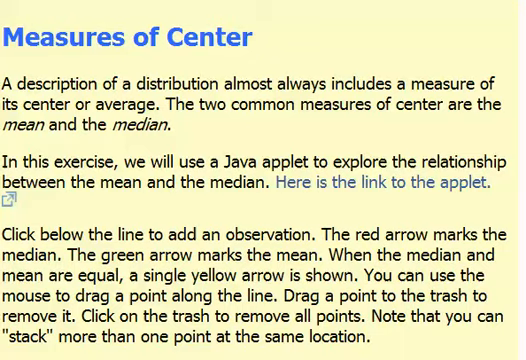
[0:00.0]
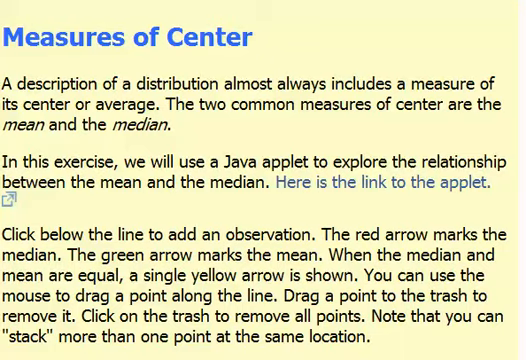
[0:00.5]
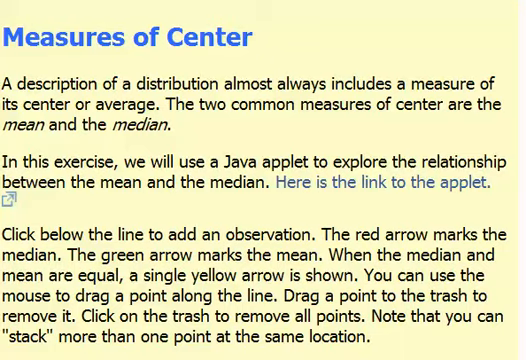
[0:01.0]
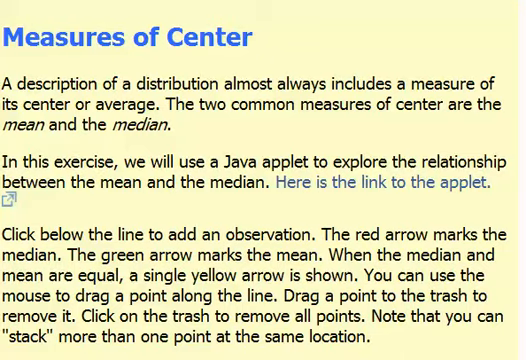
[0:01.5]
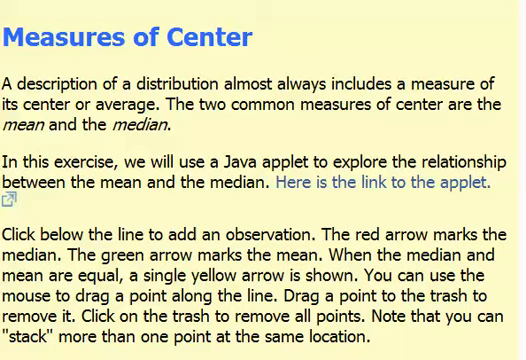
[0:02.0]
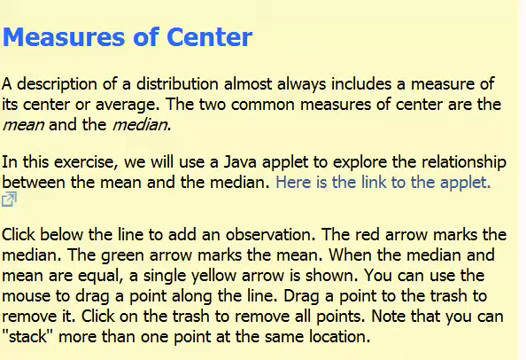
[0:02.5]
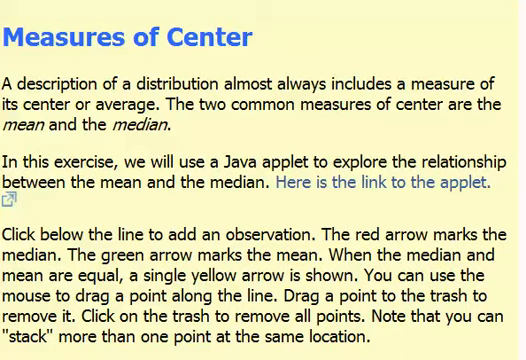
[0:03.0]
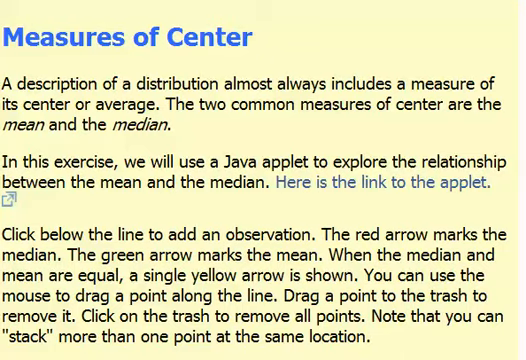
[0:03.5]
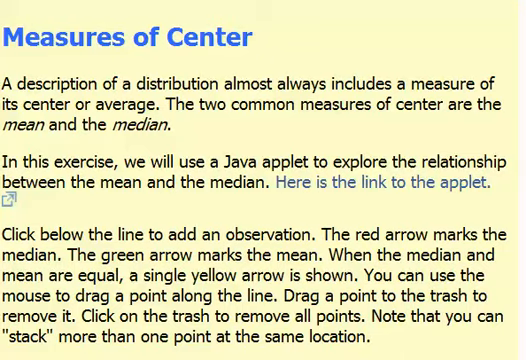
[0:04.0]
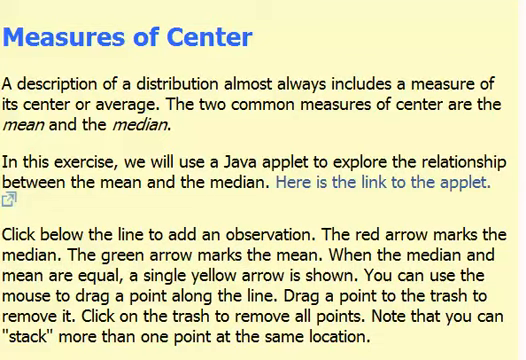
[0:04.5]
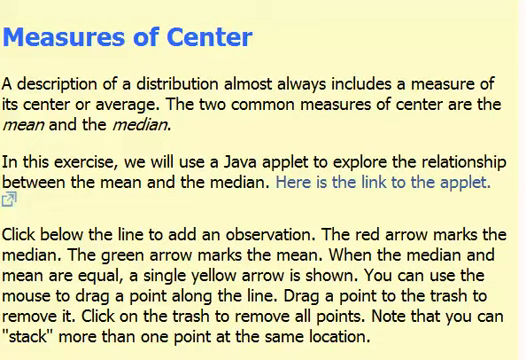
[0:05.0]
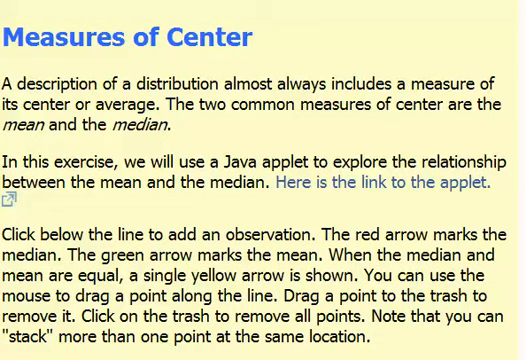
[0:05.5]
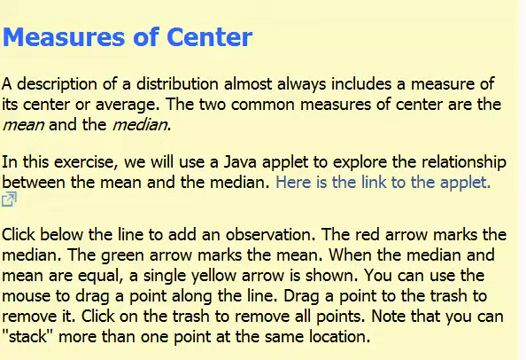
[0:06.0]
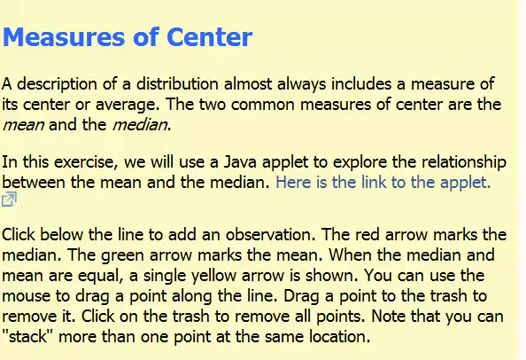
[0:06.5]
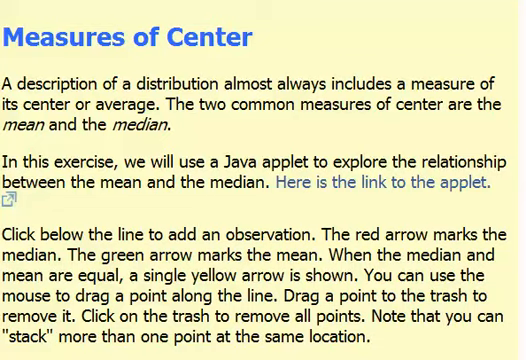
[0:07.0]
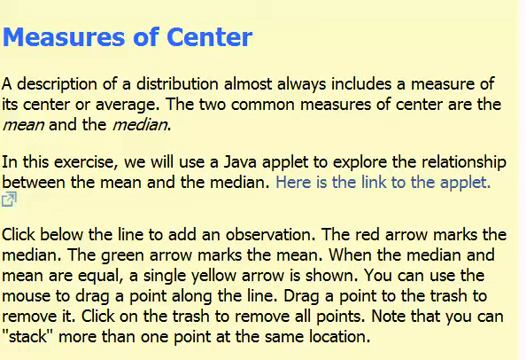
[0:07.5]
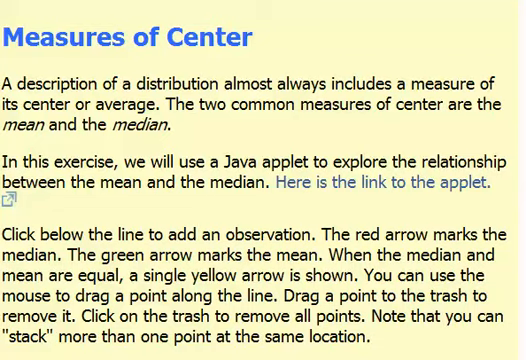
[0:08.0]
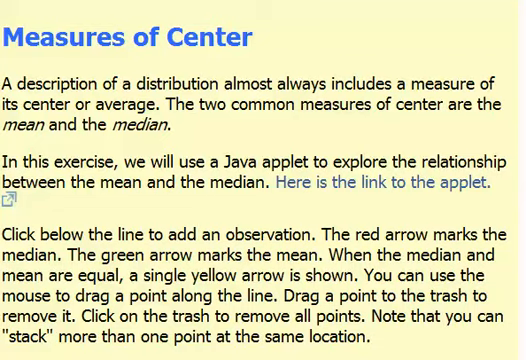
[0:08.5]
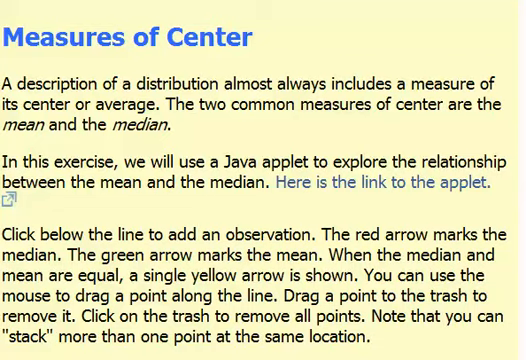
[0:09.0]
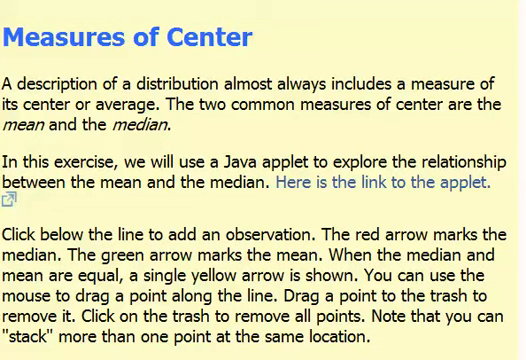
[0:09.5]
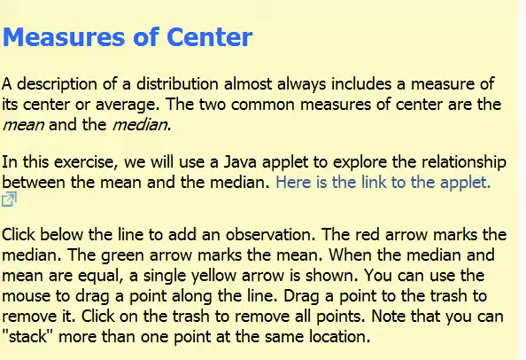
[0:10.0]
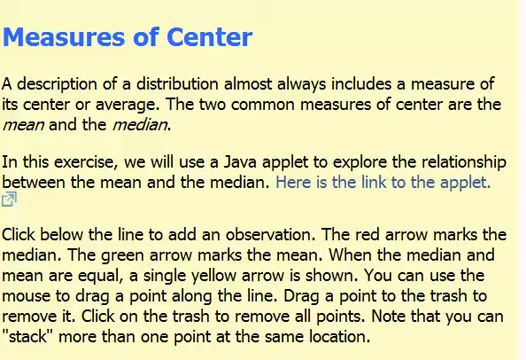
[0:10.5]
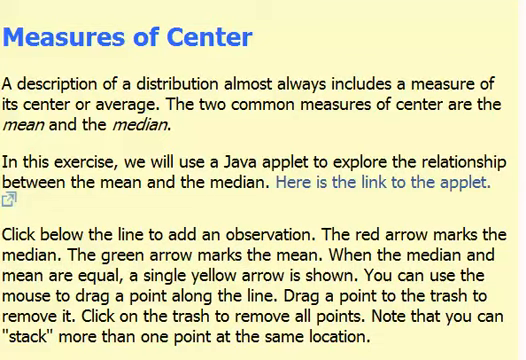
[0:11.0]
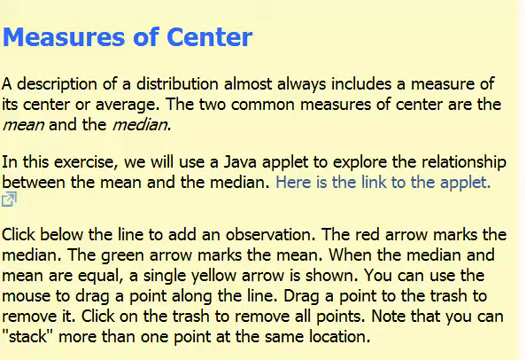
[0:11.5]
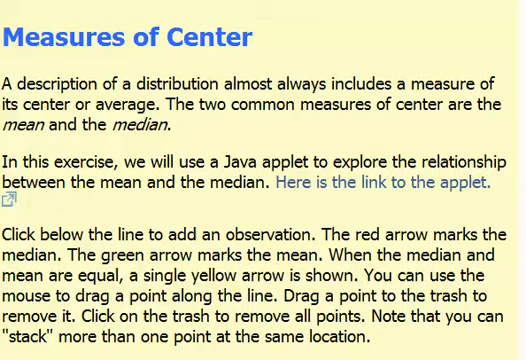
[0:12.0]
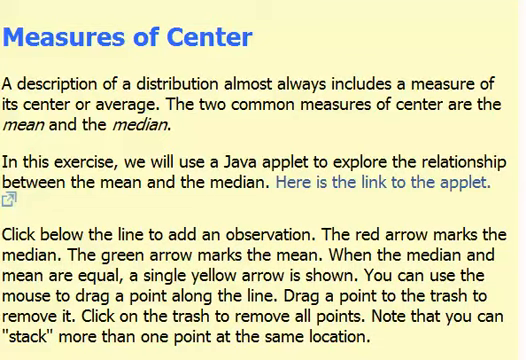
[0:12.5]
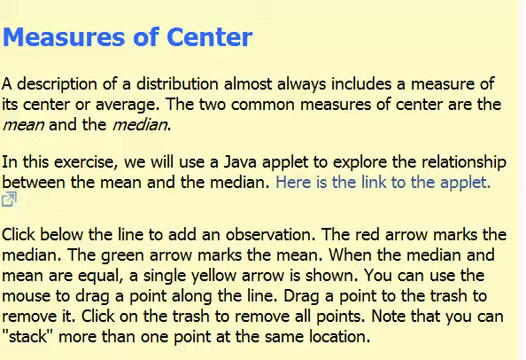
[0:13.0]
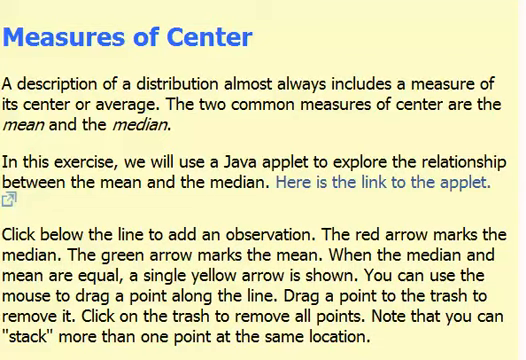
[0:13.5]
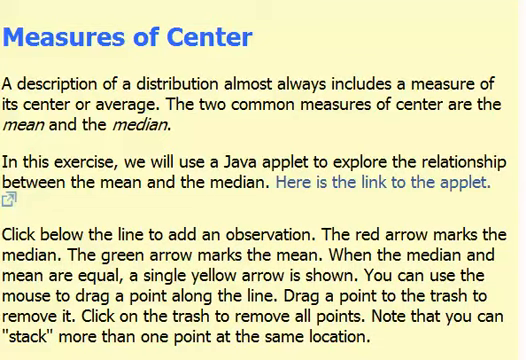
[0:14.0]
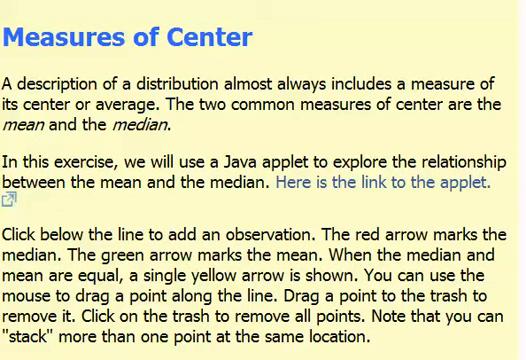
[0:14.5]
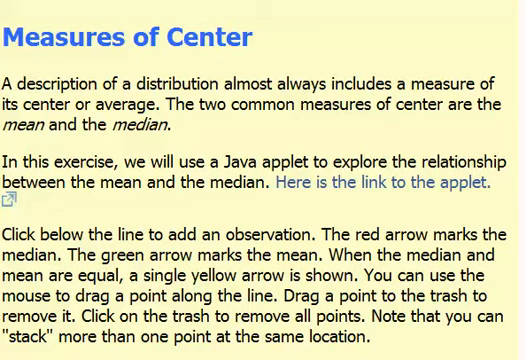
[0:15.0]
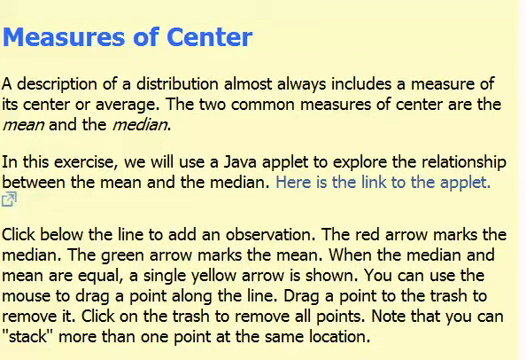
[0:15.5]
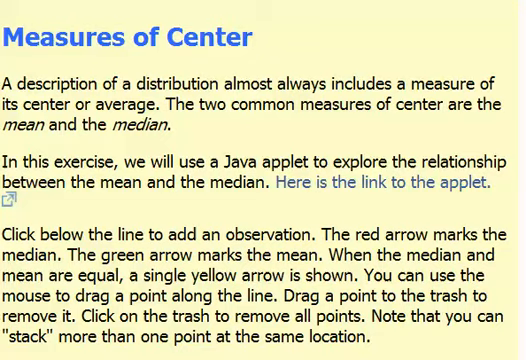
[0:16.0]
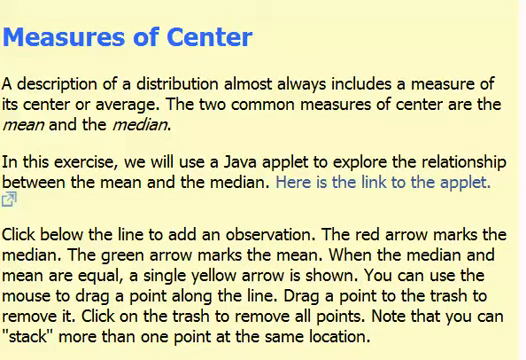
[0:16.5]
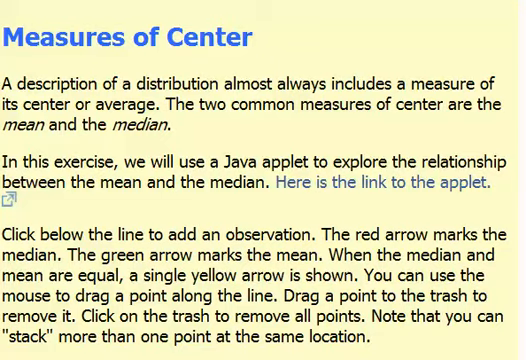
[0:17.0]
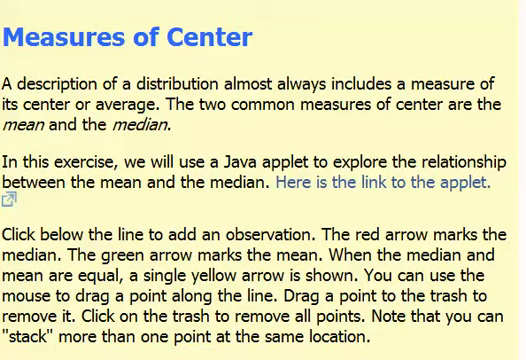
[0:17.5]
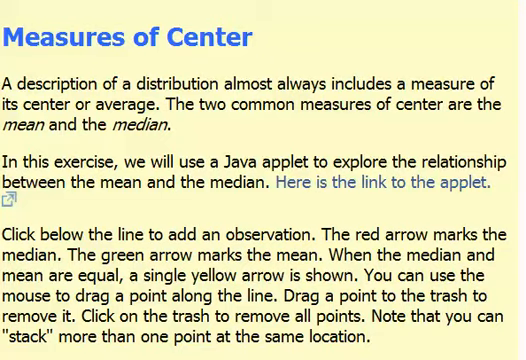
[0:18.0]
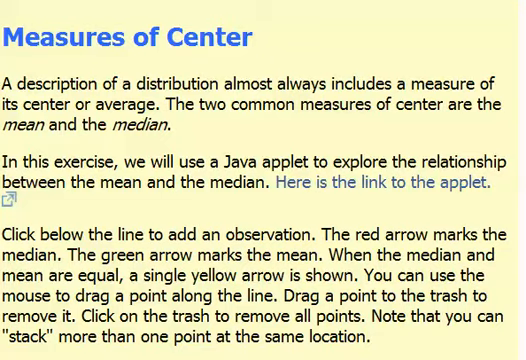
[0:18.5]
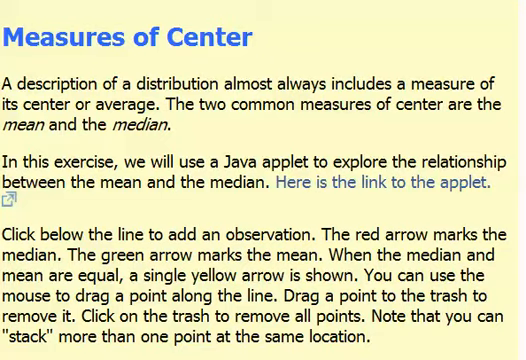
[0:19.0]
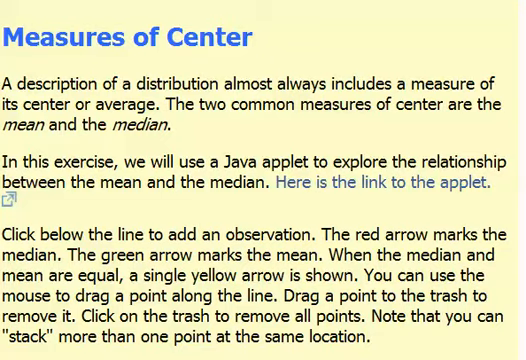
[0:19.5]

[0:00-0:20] The video opens with the on-screen heading "measures of center." Below it is a definition: "a description of a distribution almost always includes a measure of its center or average. The two common measures of center are the mean and the median." The text under the heading has three paragraphs. The next reads "in this exercise, we will use a Java applet to explore the relationship between the mean and the median," followed by "here is the link to the applet," with the link highlighted in blue, indicating it is a link. The third paragraph reads "click below the line to add an observation. The red arrow marks the median. The green arrow marks the mean. When the median and the mean are equal, a single yellow arrow is shown. You can use the mouse to drag a point along the line, drag a point to the trash to remove it, click on the trash to remove all points. Note that you can stack more than one point at the same location."